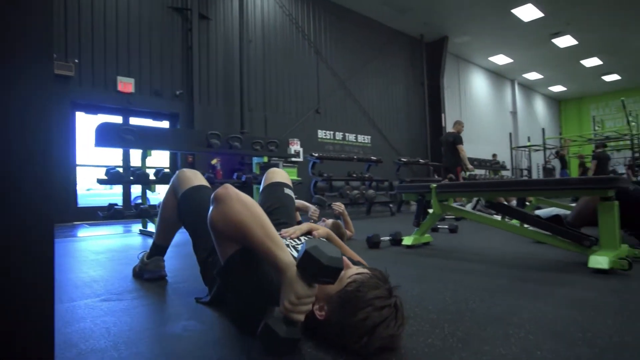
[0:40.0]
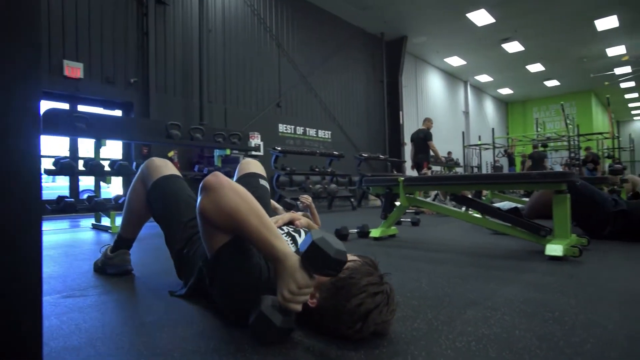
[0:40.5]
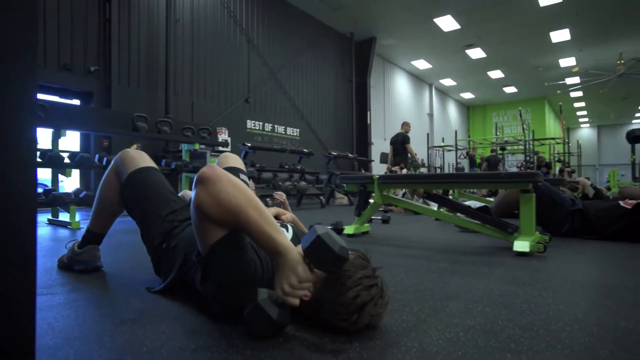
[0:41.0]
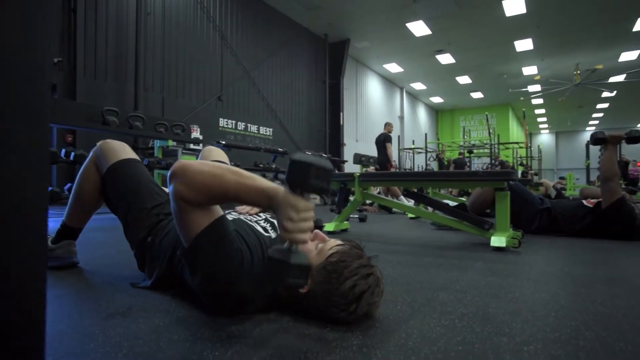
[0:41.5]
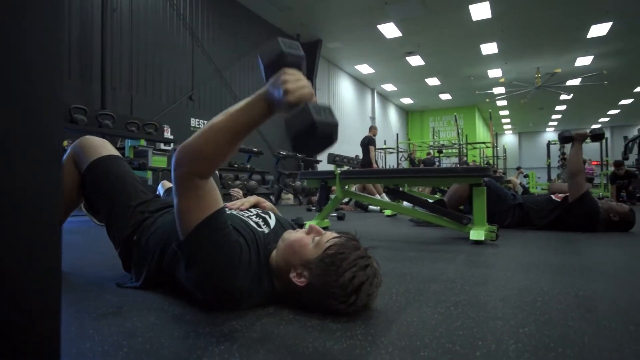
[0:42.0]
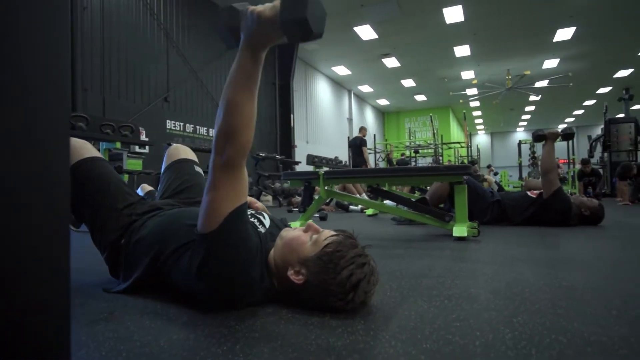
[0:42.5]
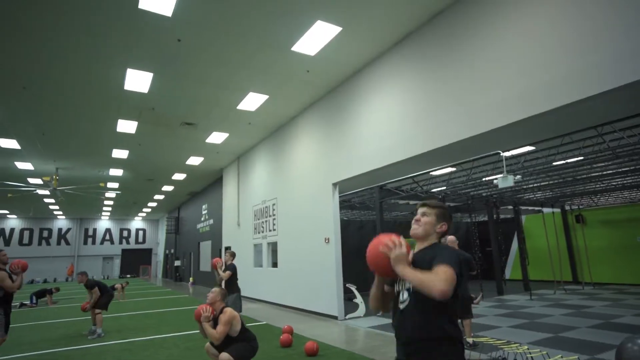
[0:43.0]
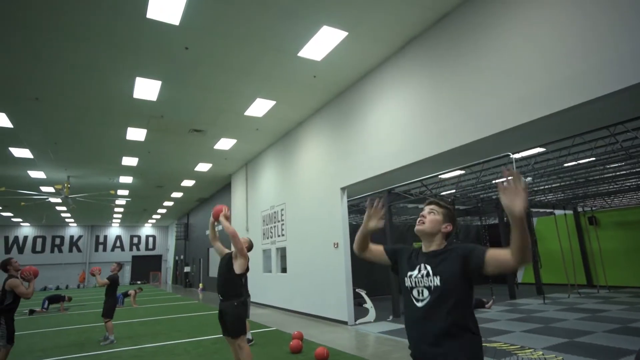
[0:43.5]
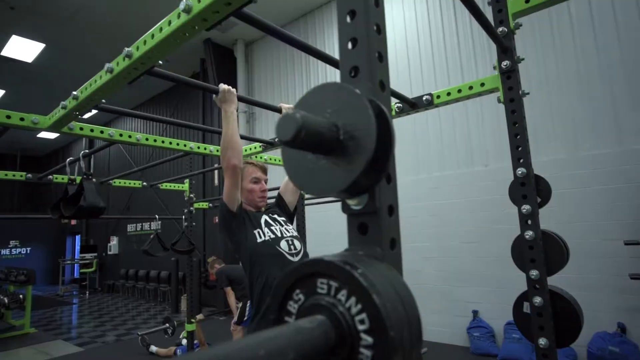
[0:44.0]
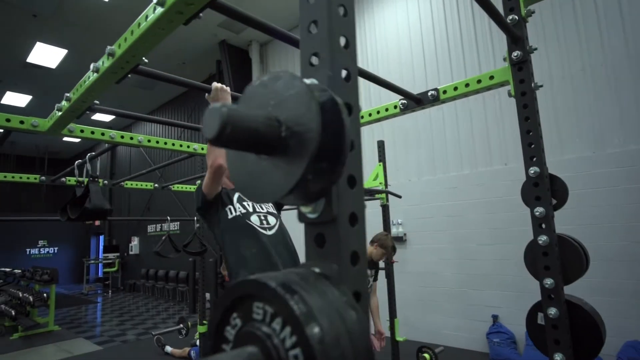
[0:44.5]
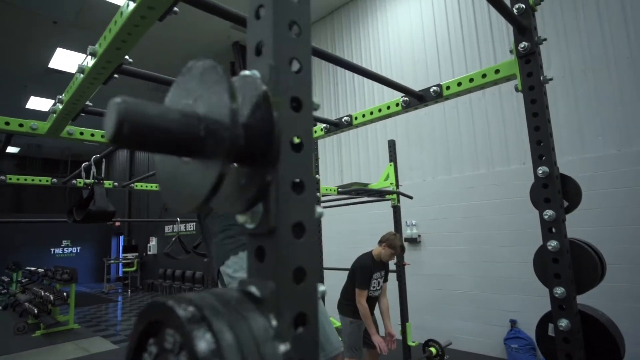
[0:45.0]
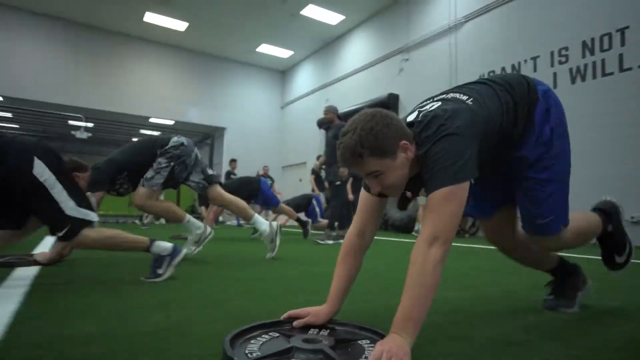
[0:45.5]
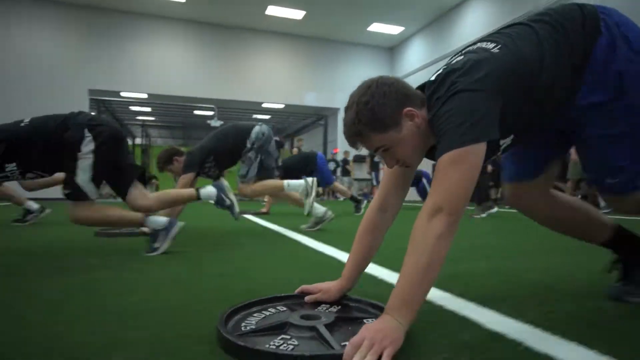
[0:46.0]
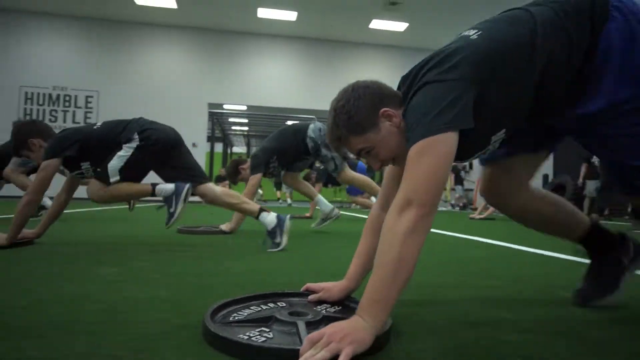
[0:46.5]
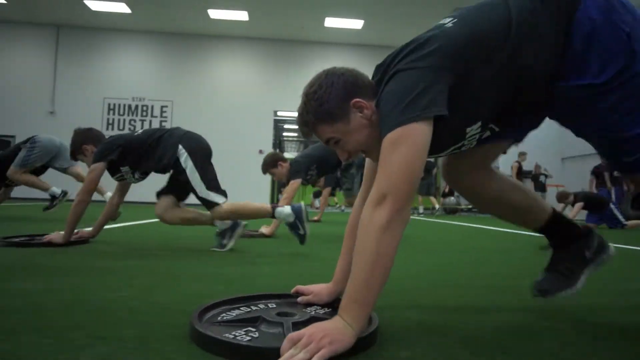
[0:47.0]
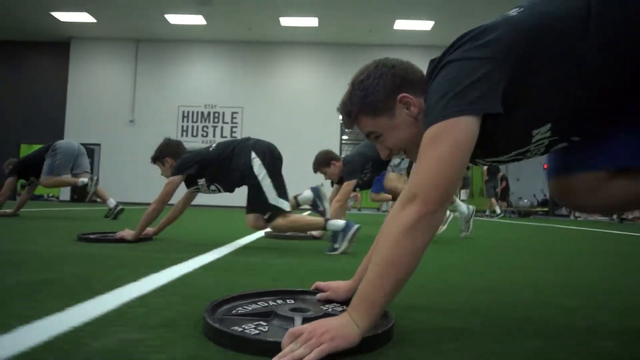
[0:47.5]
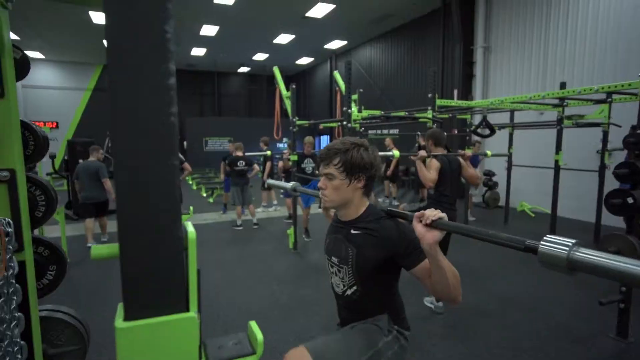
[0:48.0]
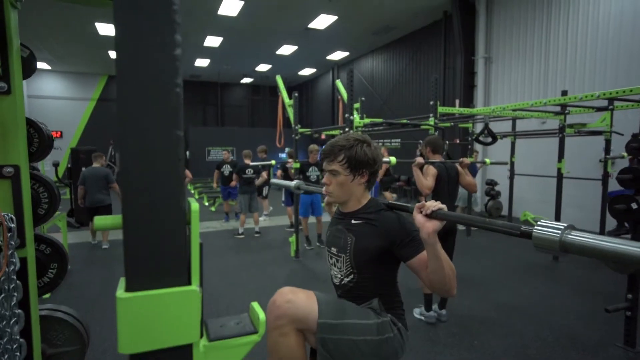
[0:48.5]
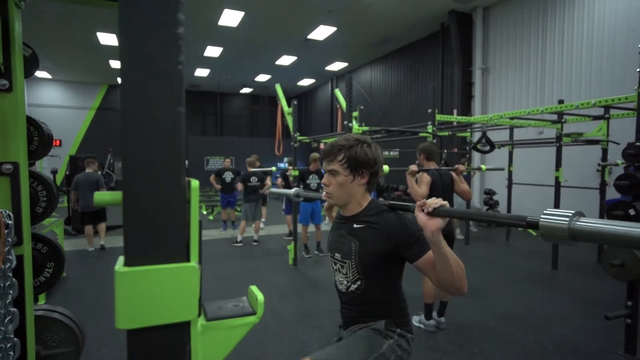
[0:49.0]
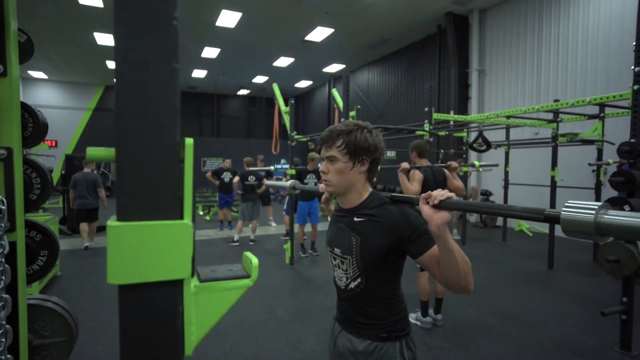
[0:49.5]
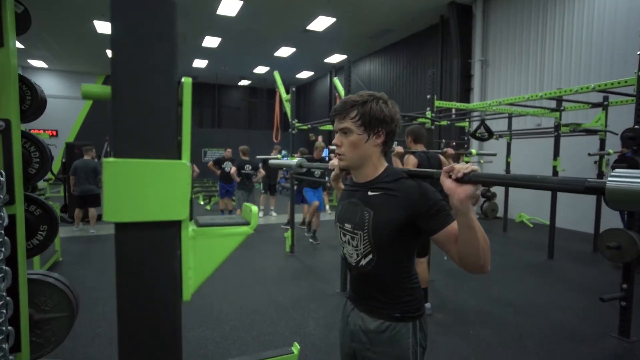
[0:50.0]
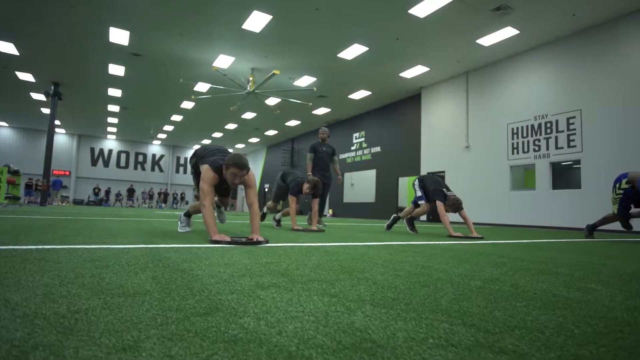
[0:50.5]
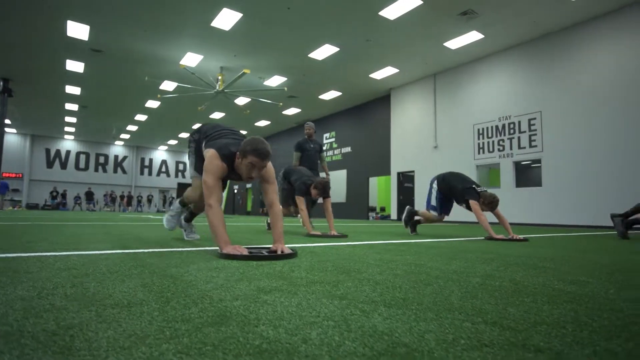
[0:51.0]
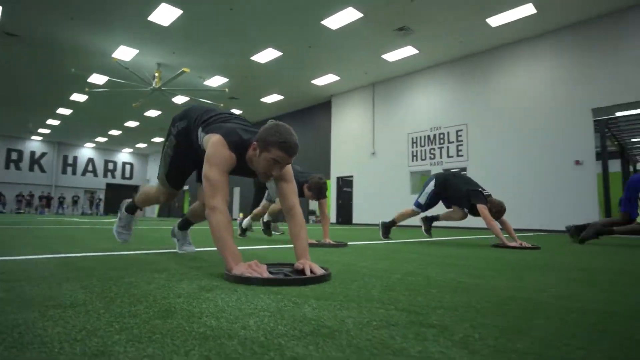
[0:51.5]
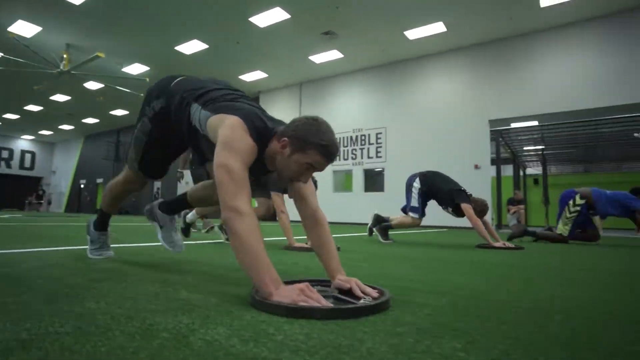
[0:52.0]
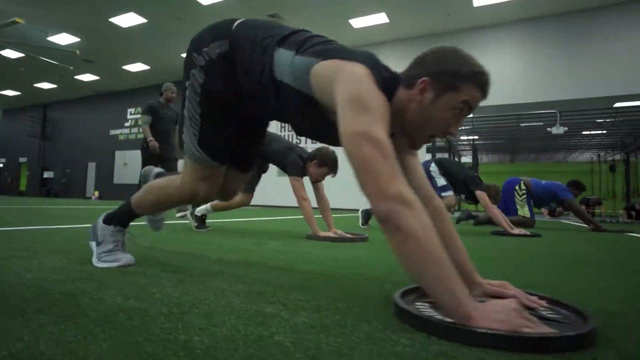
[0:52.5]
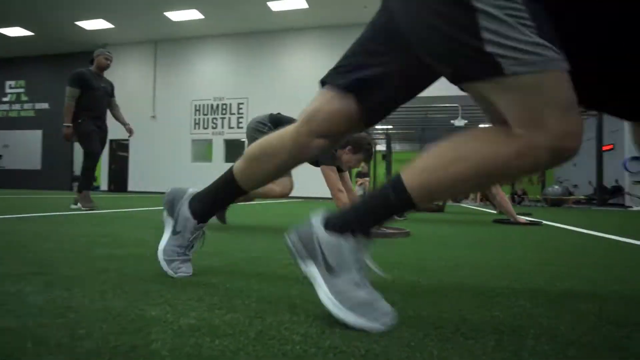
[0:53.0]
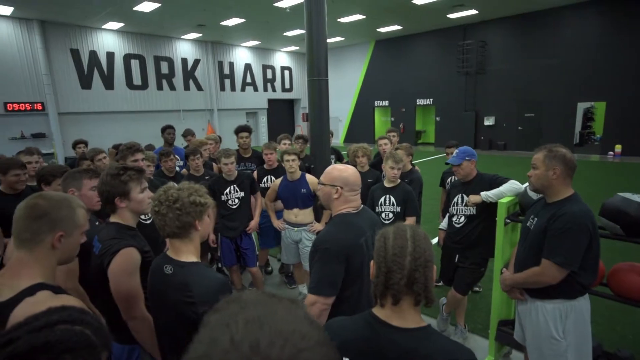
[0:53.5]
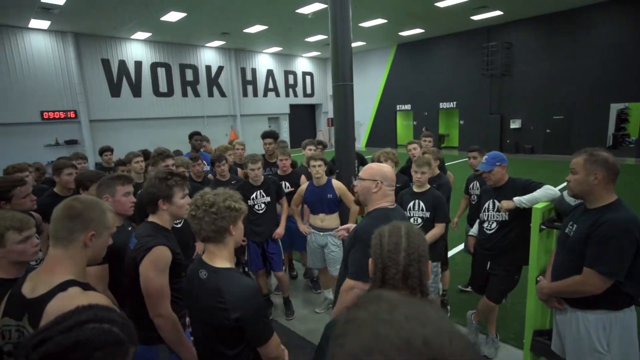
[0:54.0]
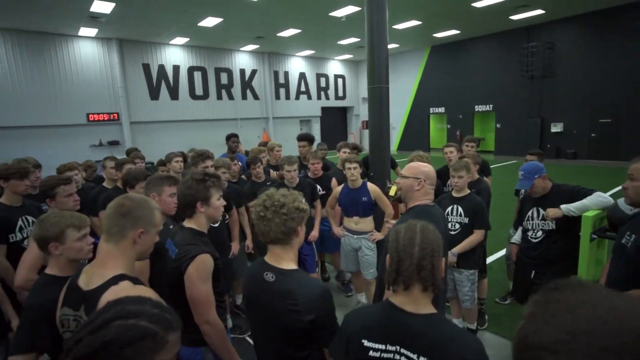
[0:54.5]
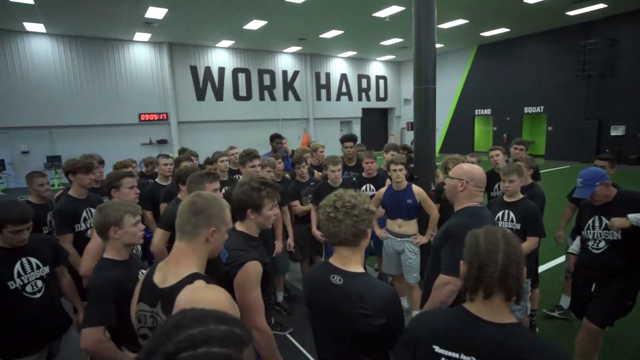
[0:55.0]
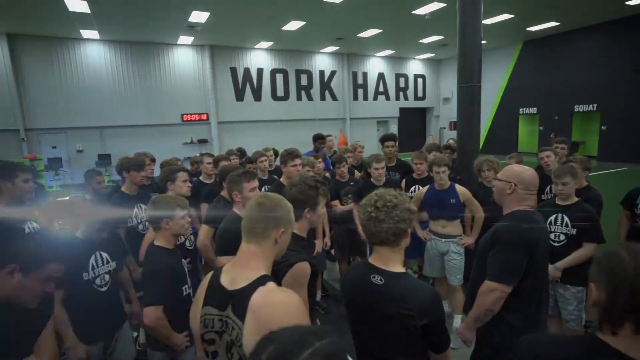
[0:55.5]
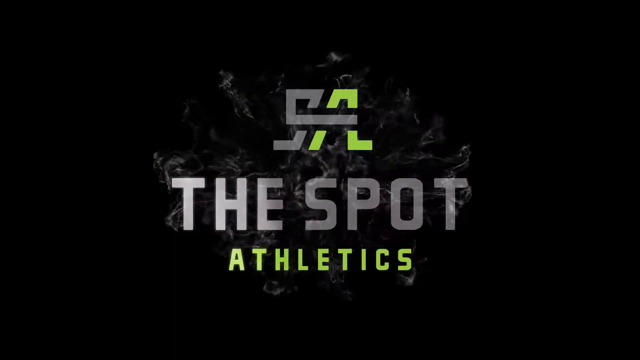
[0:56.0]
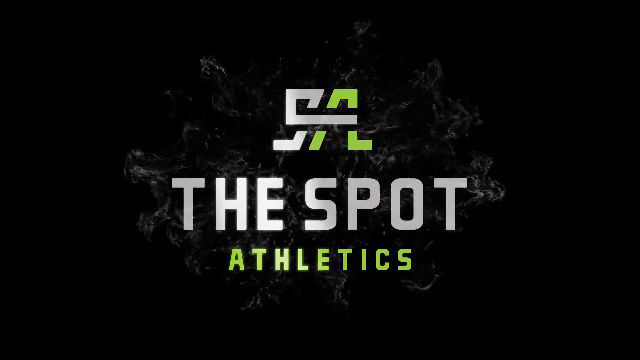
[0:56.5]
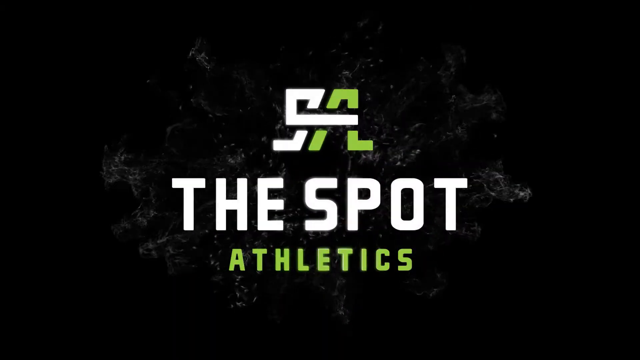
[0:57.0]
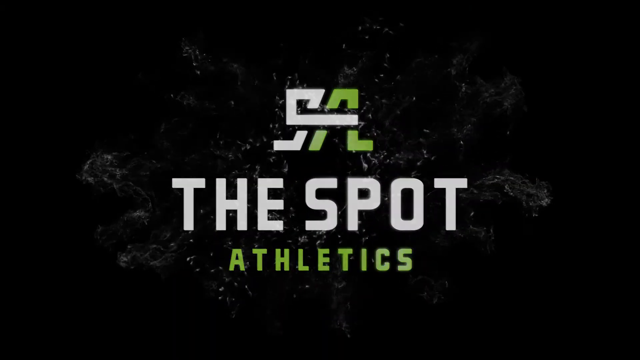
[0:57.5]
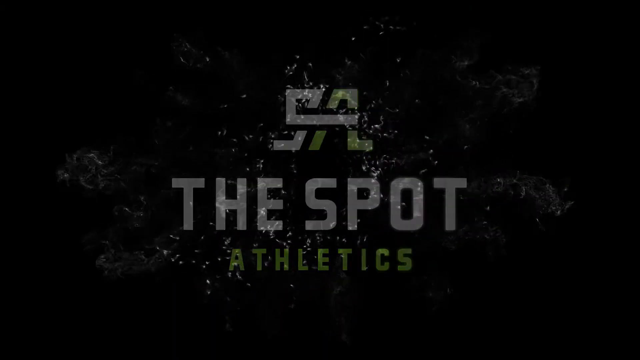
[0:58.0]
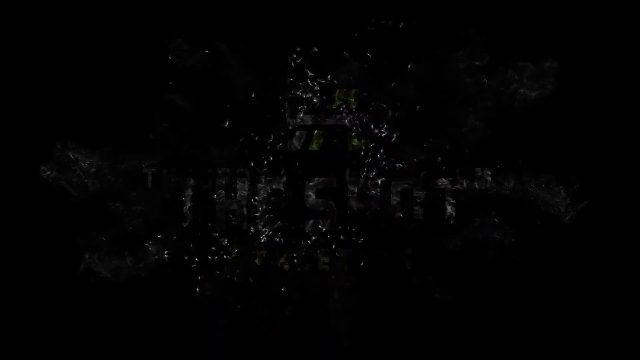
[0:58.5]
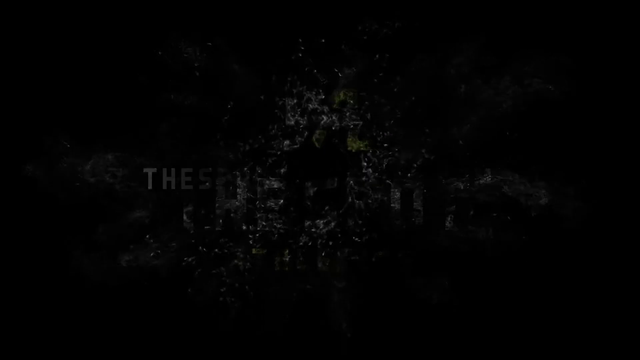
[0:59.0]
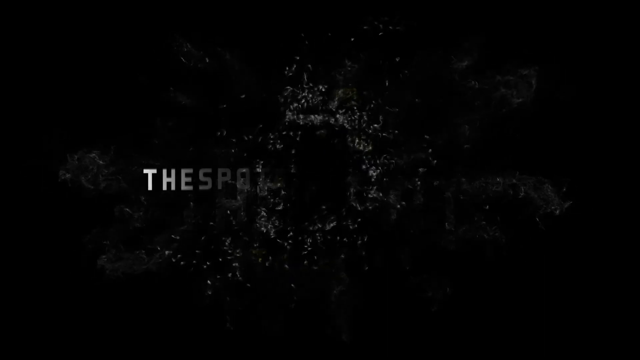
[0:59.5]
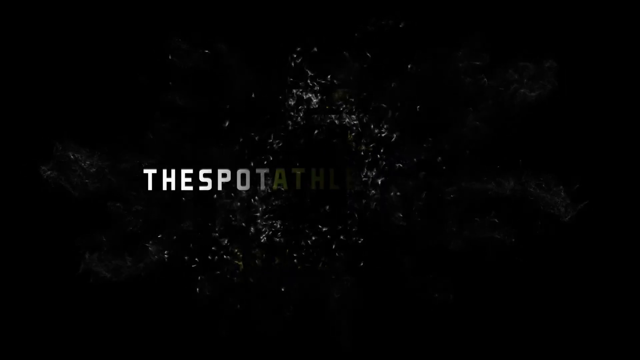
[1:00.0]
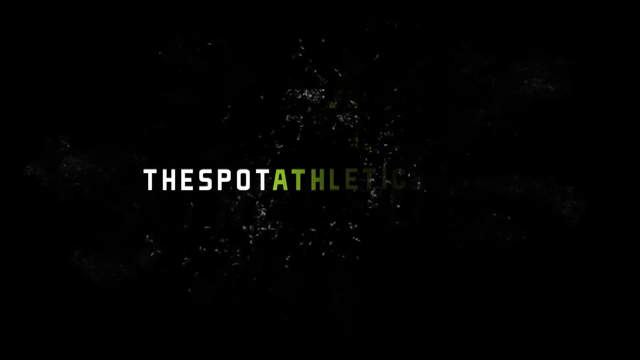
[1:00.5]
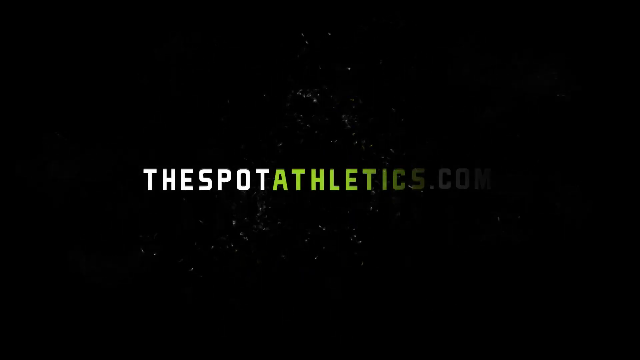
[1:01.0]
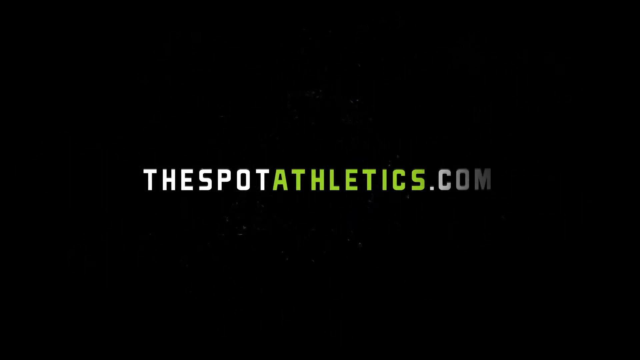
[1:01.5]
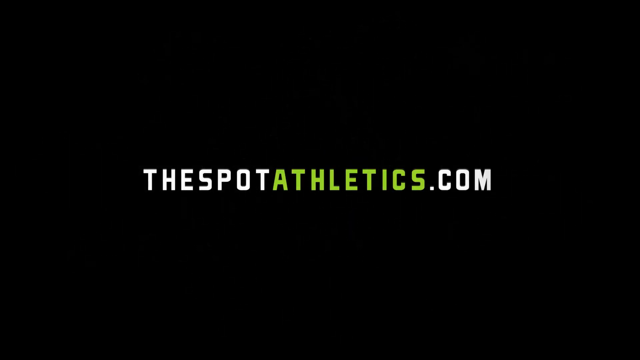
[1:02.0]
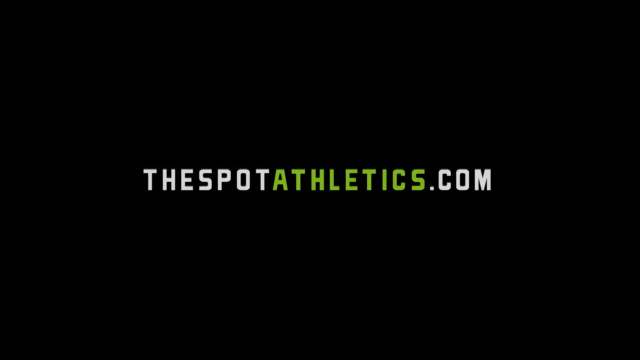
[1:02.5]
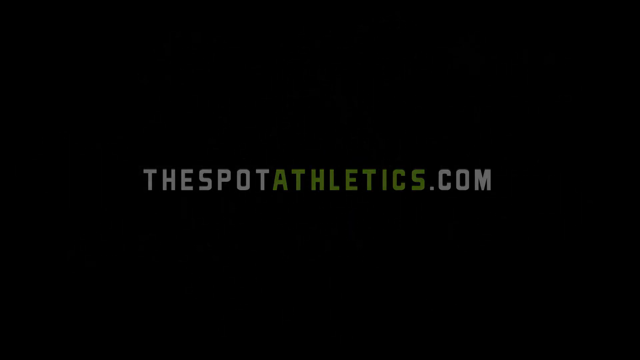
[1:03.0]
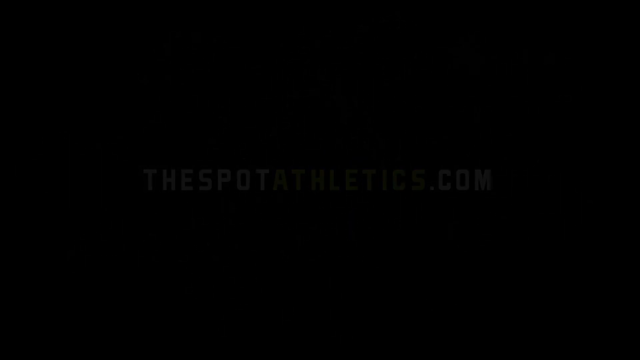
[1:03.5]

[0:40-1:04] Inside the gymnasium, the young men lie on the floor; this angle shows only those lying on the floor, raising a barbell from beside their ear out in front of them with the elbow extended. Next, two, perhaps three, young men stand still with basketballs and throw them upward. Then, on what appears to be monkey bars, a young man does chin-ups. Young men then crouch over the round weight plates from a large barbell bar, placed on the floor, with two hands on them, sliding the heavy weights down the length of the football-field-looking floor. A different part of the gym shows the monkey bars in the background and a young man standing with a deadlift bar on his shoulders, not doing anything. The young men slide the heavy bar weights down the football field floor. Then all the young men gather around, some with their hands on their waist and others with their hands by their sides, listening to a bald-headed man in glasses who speaks to them. A black background reads "SA, The Spot Athletics," then the URL "thespotathletics.com" comes onto the black background and fades away.